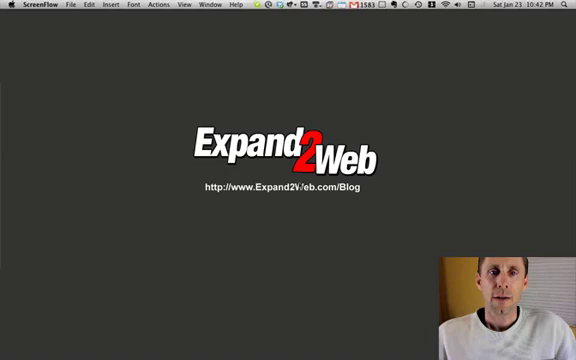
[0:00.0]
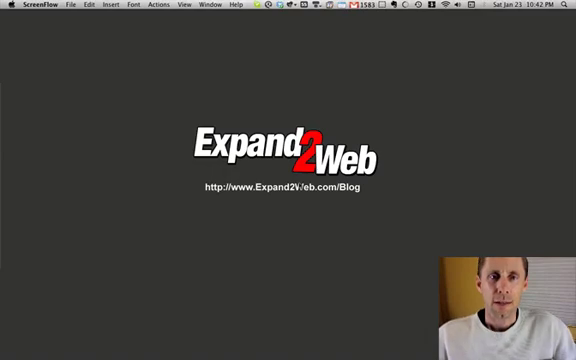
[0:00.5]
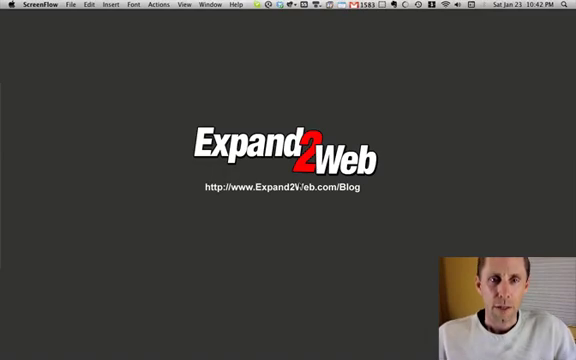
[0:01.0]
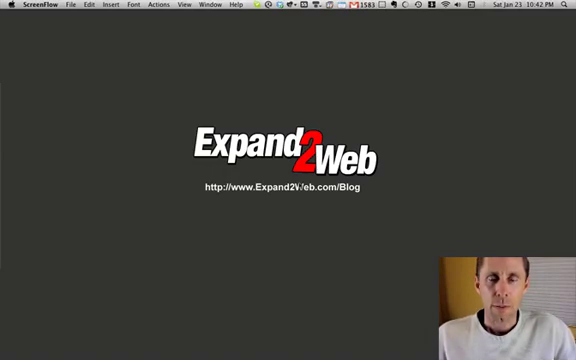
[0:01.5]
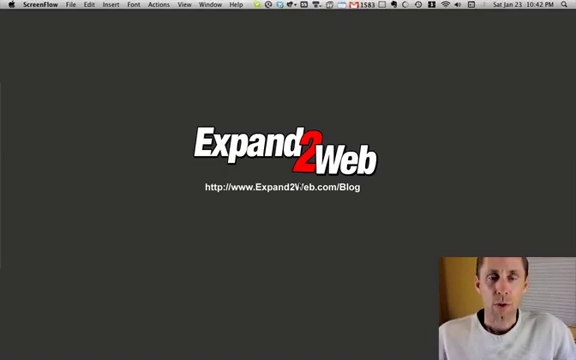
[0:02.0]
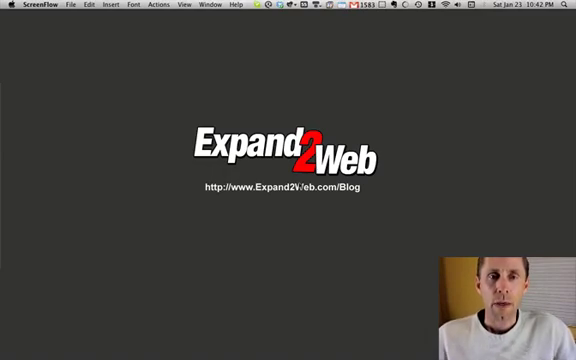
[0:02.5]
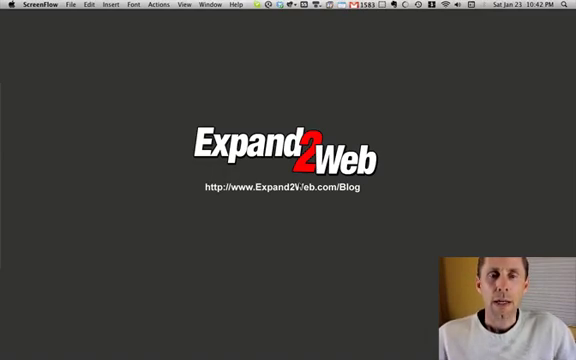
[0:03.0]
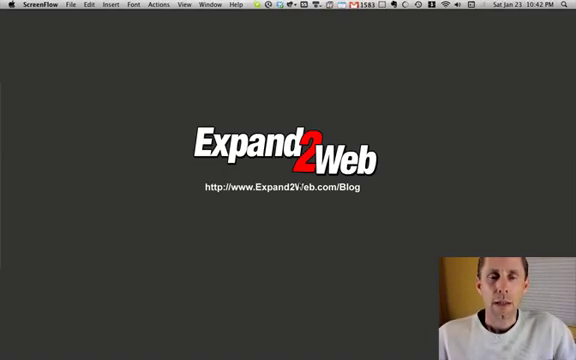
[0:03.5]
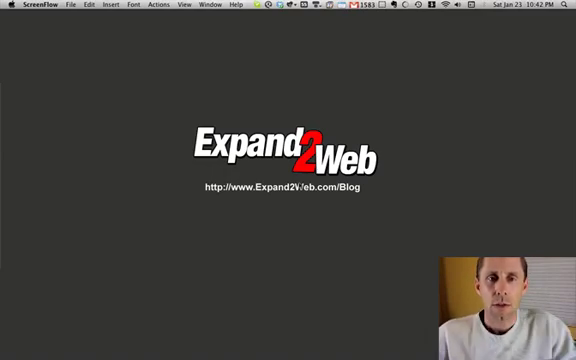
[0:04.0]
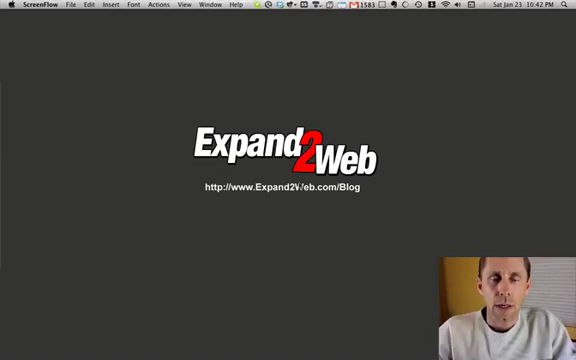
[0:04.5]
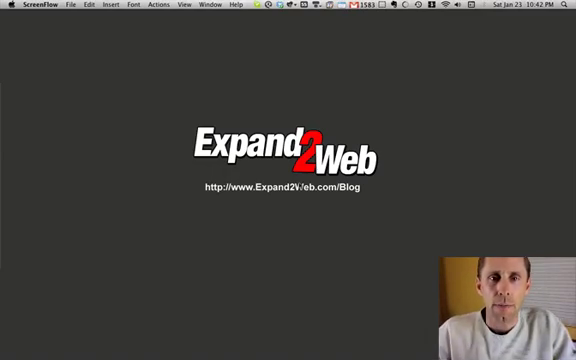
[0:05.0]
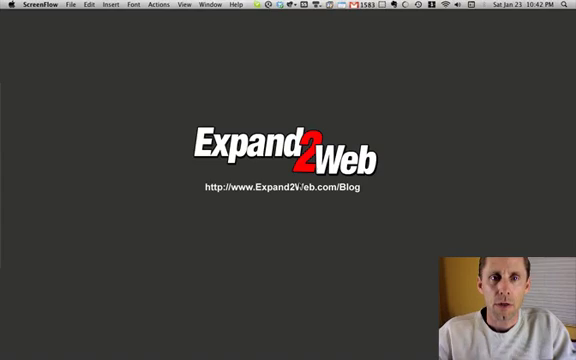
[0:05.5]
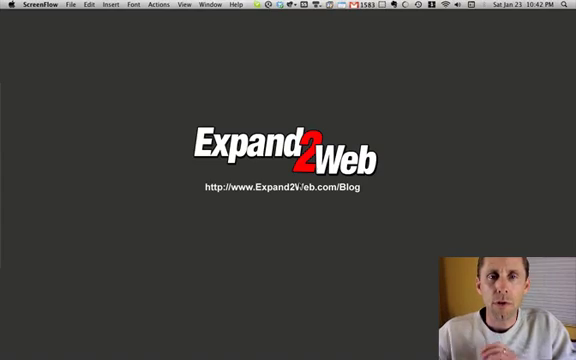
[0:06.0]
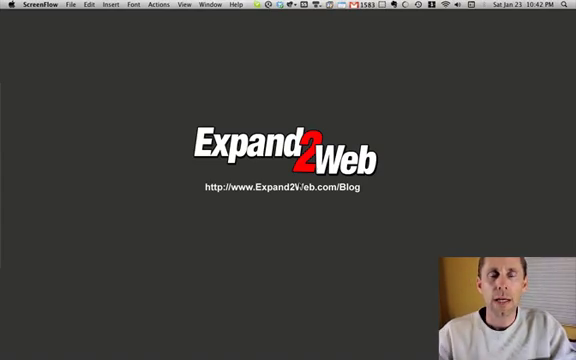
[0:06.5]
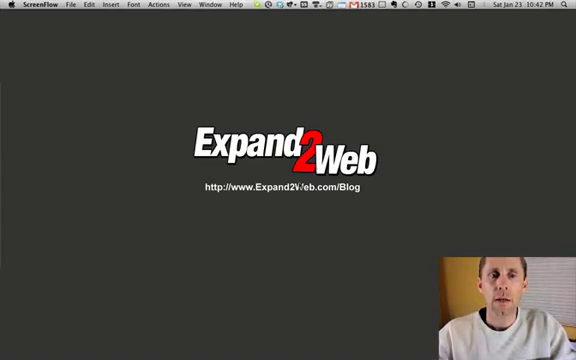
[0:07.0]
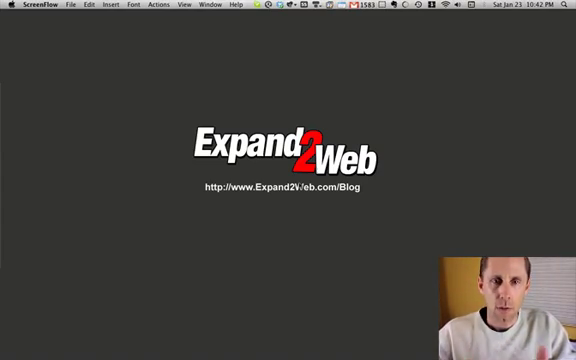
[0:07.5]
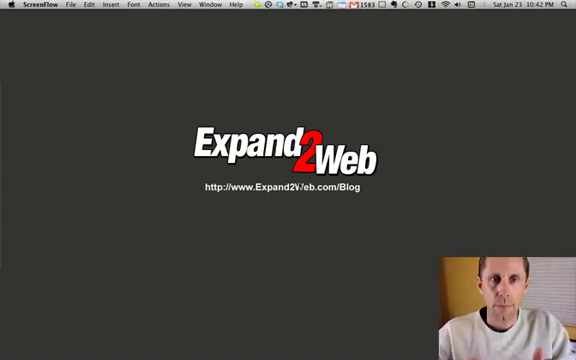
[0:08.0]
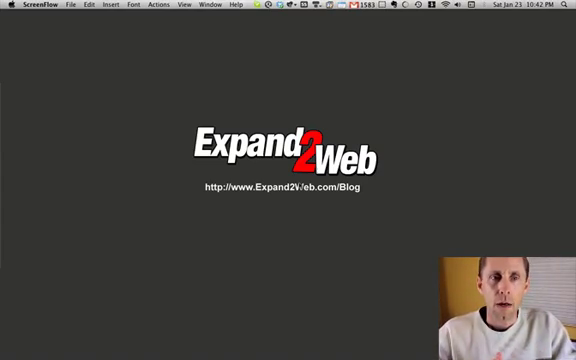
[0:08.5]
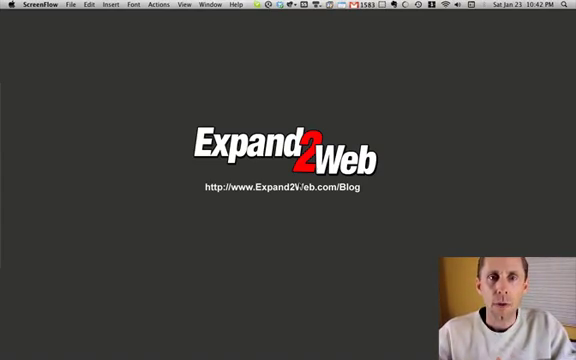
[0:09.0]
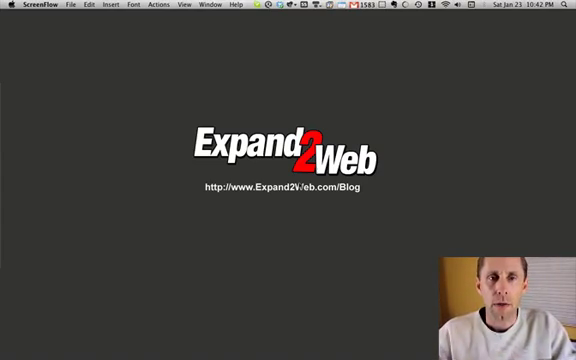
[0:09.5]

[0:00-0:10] A shared screen on an Apple is displayed, and on the screen it says "expand to web" followed by the URL for the expand to web blog. In the lower right-hand corner a man appears in a separate video box. He appears older, in his 40s or 50s, and appears to be sitting in an office. Along the top of the screen the date reads Saturday, January 23rd at 10:40 pm, and approximately 25,000 unread emails are indicated at the top of the screen. The man speaks, gesturing with his hands; he wears a gray sweatshirt and is slightly balding.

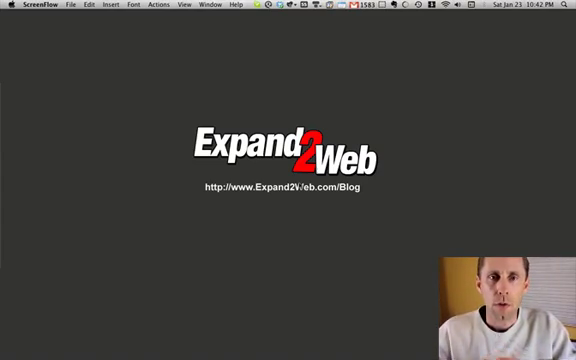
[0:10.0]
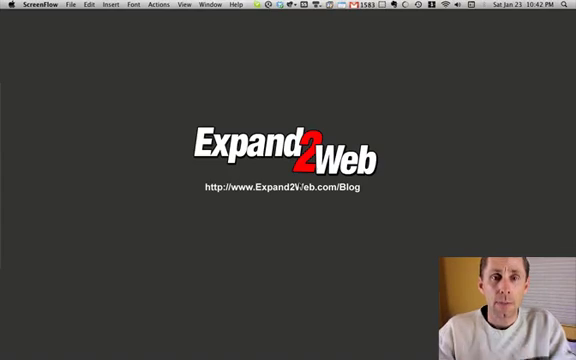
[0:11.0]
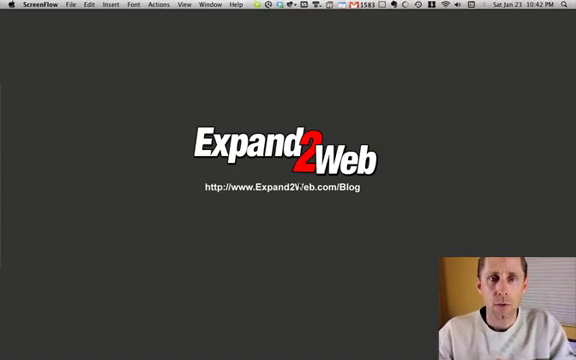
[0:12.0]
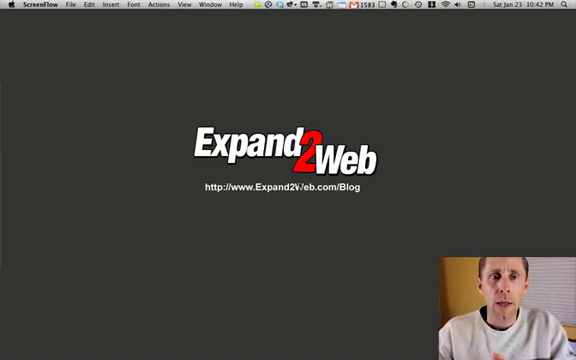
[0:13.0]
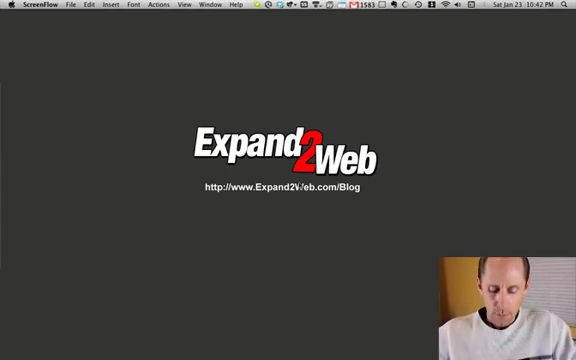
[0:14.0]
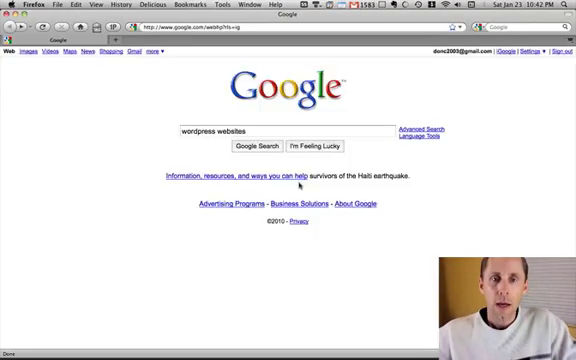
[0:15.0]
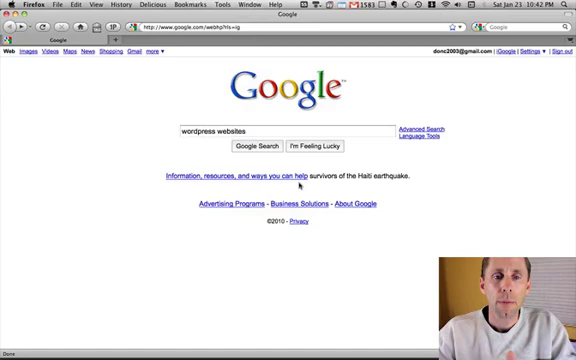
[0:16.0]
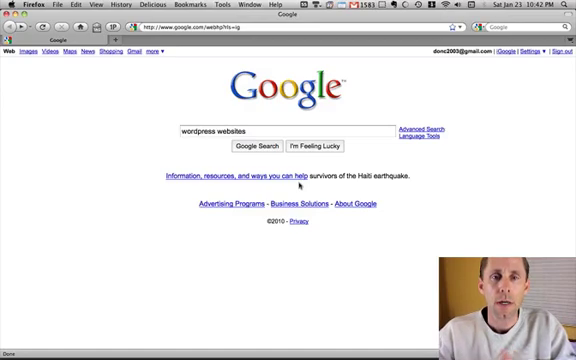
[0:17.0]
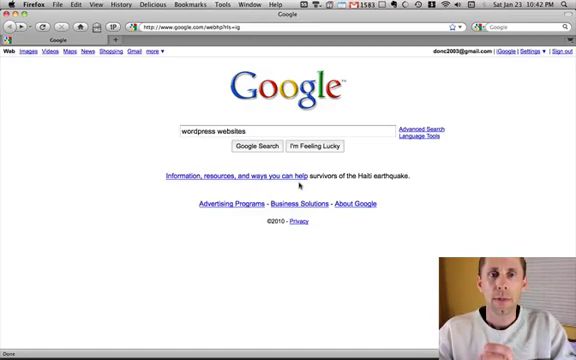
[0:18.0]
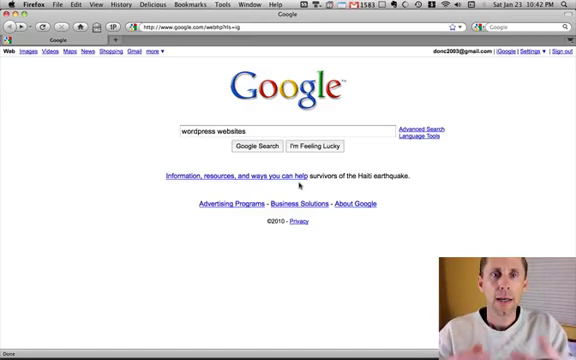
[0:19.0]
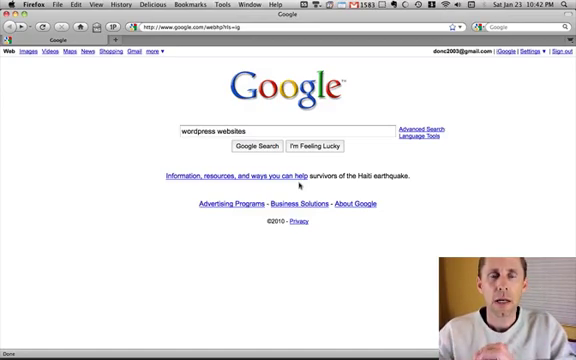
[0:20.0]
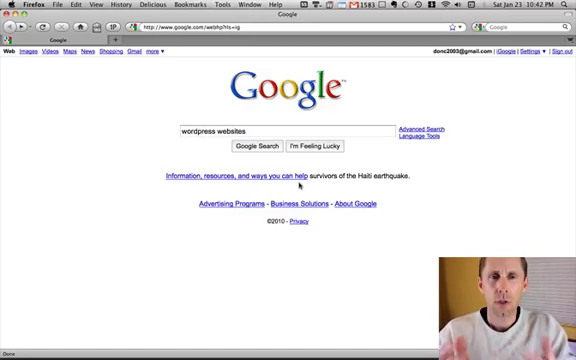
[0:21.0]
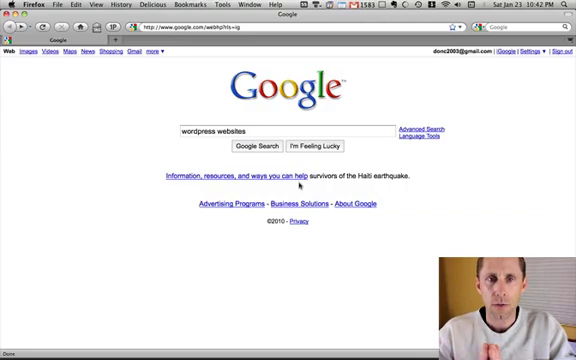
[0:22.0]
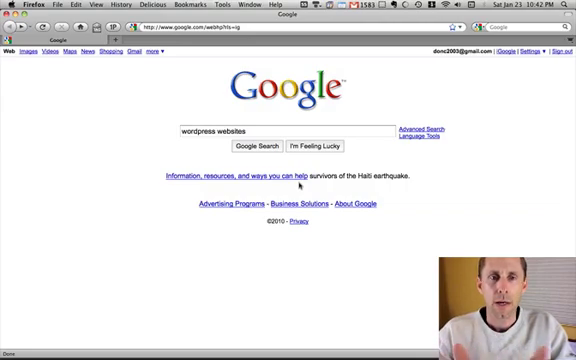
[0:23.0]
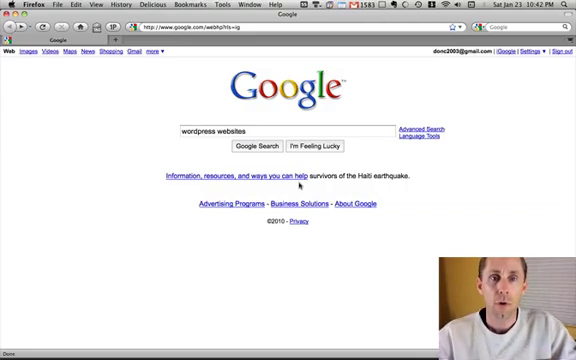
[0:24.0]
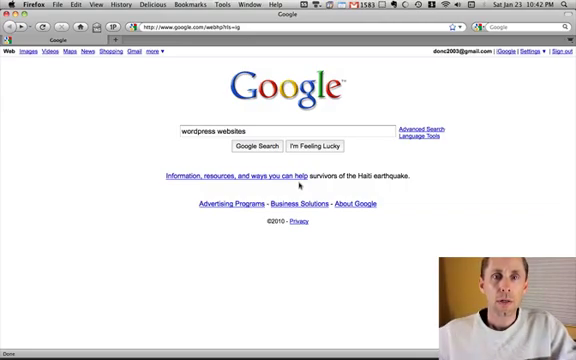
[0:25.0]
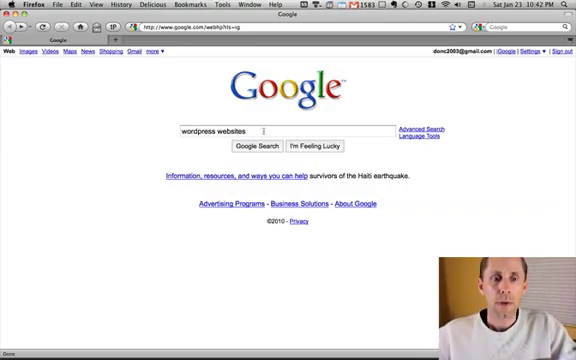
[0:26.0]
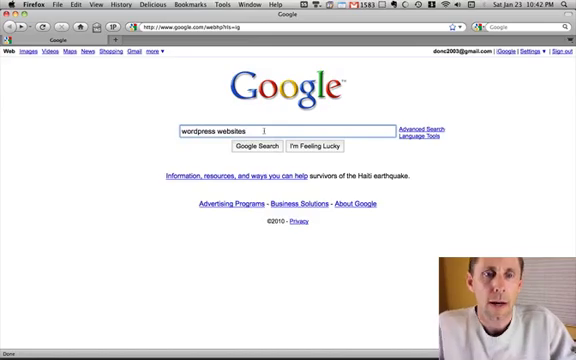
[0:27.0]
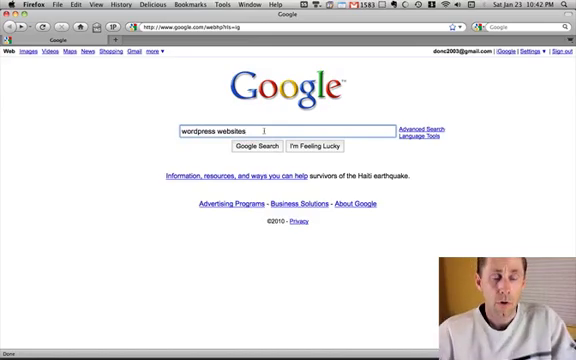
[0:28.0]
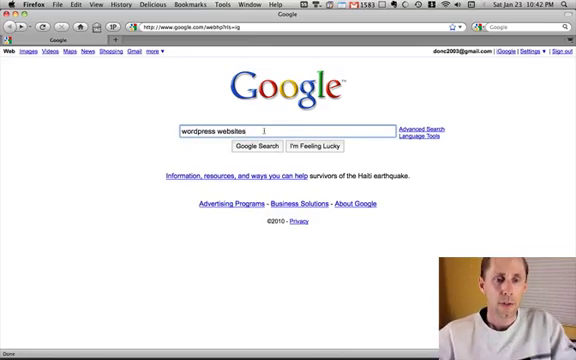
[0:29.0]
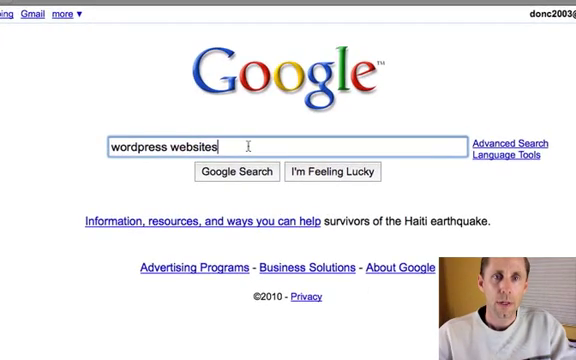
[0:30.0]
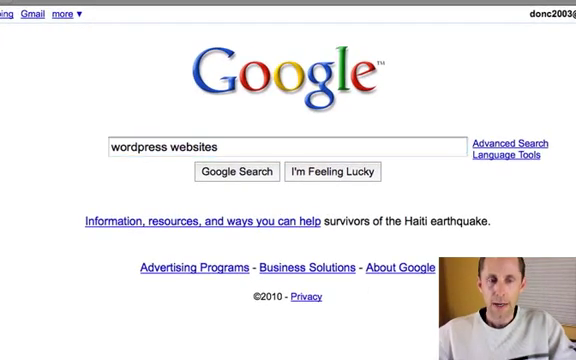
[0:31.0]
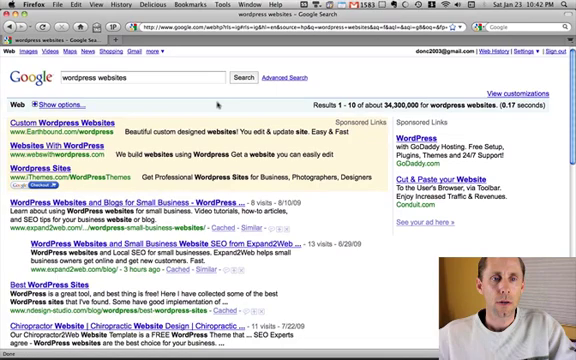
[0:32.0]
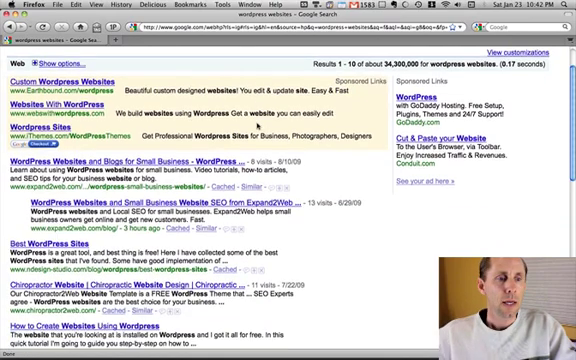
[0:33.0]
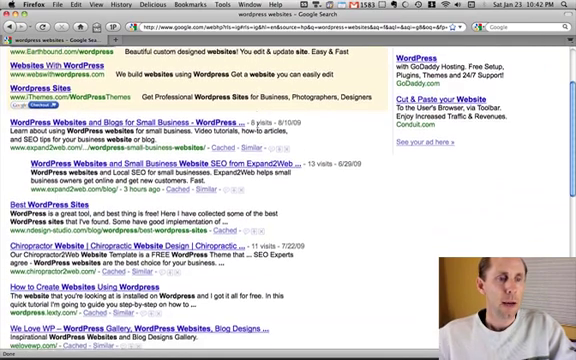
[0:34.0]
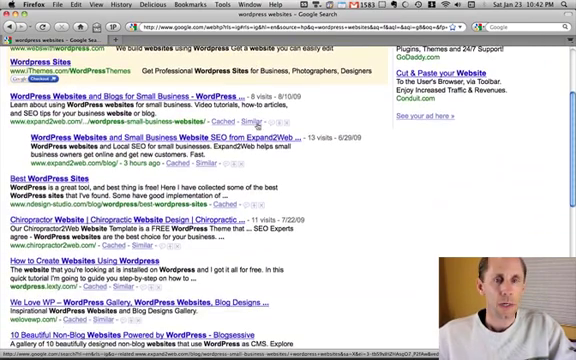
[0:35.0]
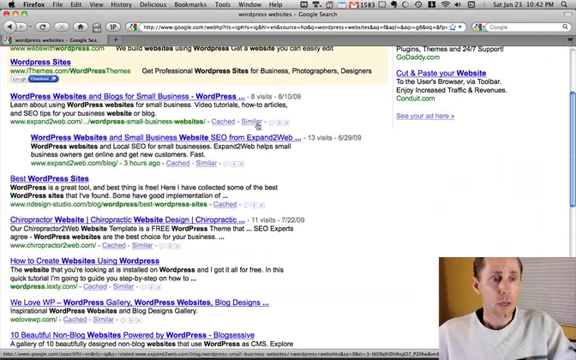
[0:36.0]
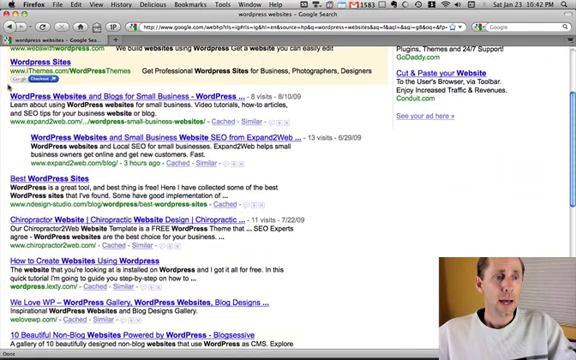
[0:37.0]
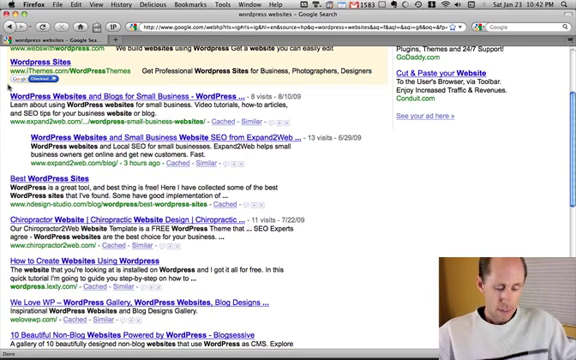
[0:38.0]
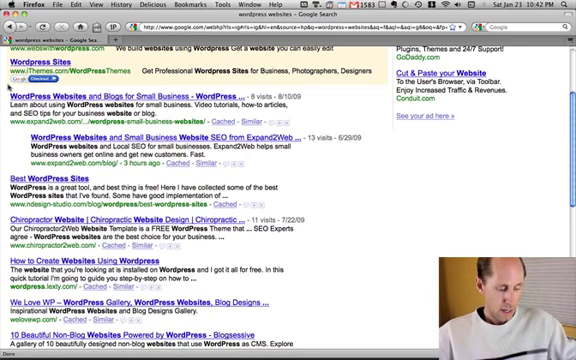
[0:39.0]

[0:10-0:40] The shared screen still shows Expand2Web, and the middle-aged man remains in the video box in the lower right-hand corner, talking. He then changes the shared screen to a Firefox web browser already open on the Google page, where the search input has the words "WordPress website" typed in. Still speaking and moving his hands around, he zooms in on the search bar and clicks the search button. The results are very old-looking website listings, with his expand2web.com website as the first search result. There are sponsored links on the right and sponsored links above. The way the search results are presented appears very old. The man keeps talking and scrolls down slightly.